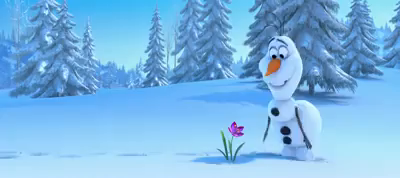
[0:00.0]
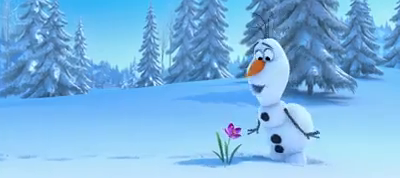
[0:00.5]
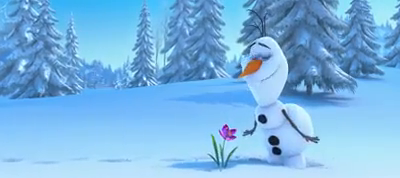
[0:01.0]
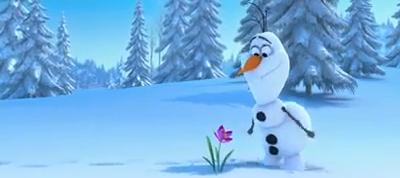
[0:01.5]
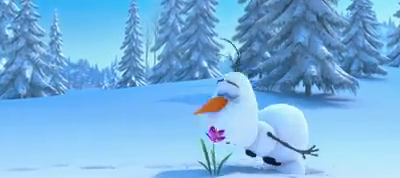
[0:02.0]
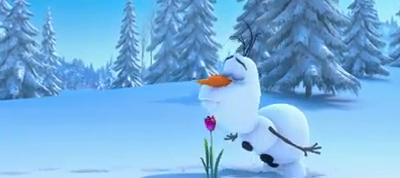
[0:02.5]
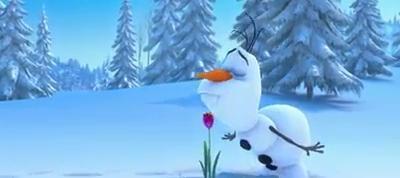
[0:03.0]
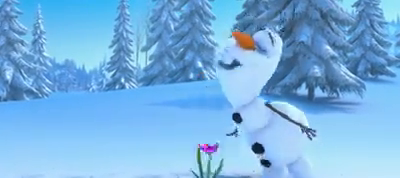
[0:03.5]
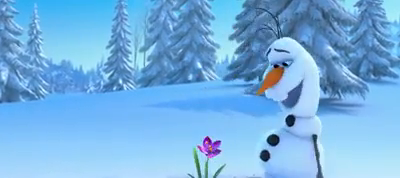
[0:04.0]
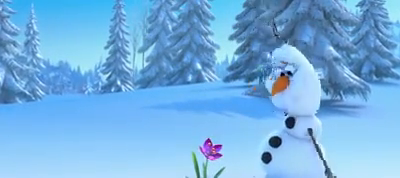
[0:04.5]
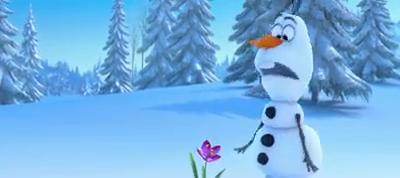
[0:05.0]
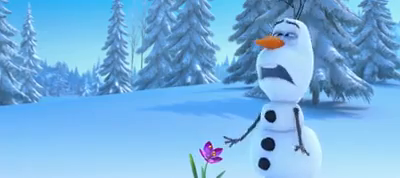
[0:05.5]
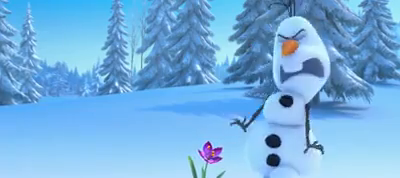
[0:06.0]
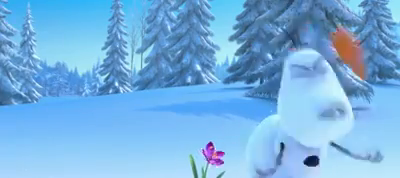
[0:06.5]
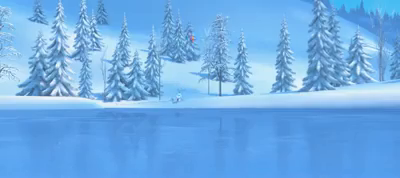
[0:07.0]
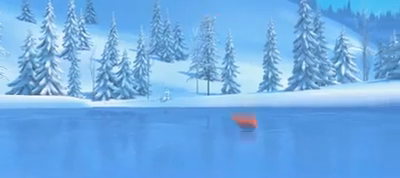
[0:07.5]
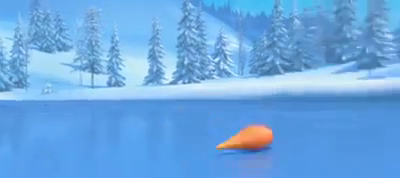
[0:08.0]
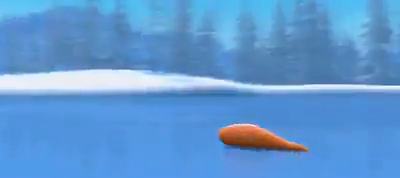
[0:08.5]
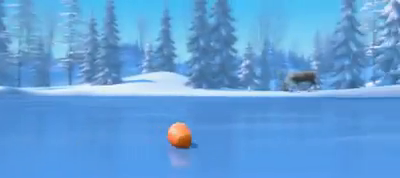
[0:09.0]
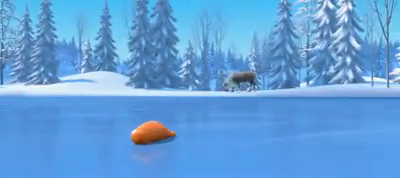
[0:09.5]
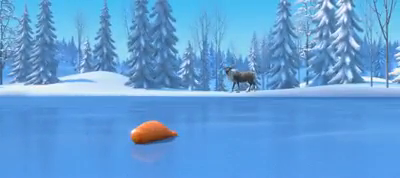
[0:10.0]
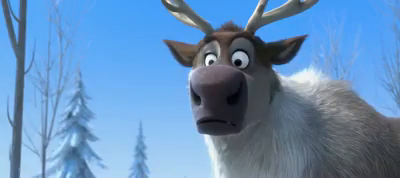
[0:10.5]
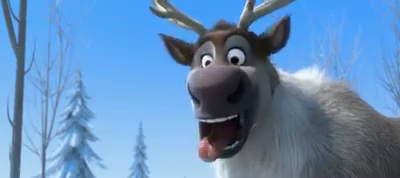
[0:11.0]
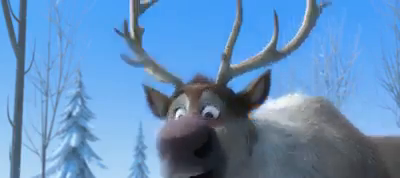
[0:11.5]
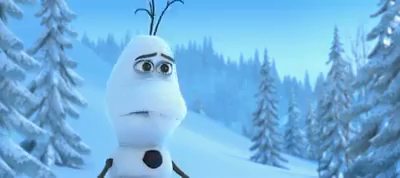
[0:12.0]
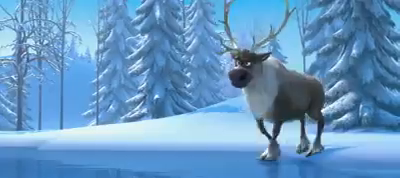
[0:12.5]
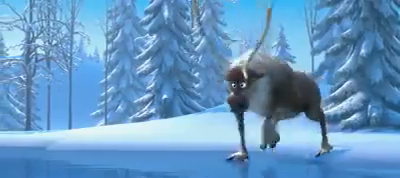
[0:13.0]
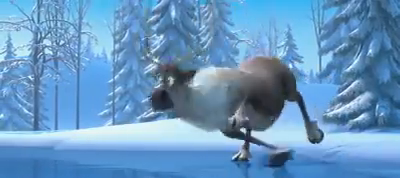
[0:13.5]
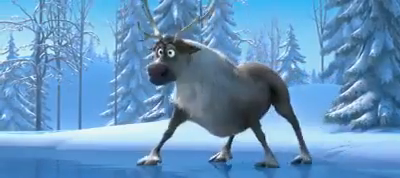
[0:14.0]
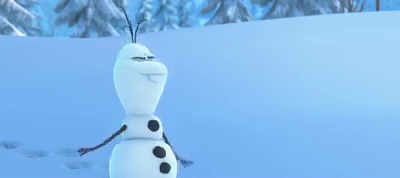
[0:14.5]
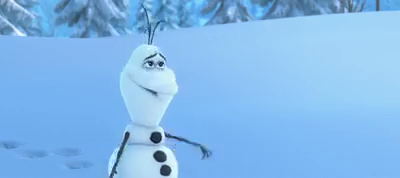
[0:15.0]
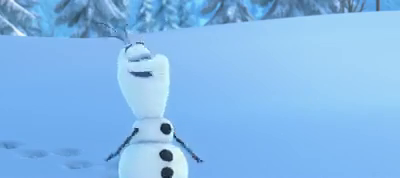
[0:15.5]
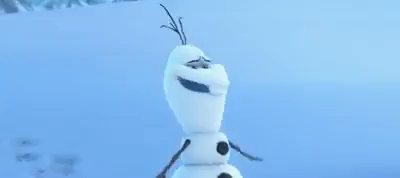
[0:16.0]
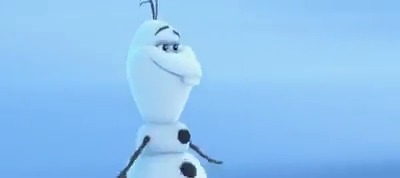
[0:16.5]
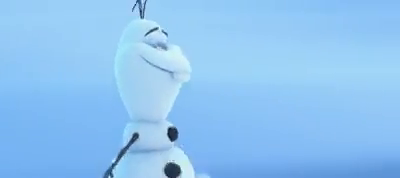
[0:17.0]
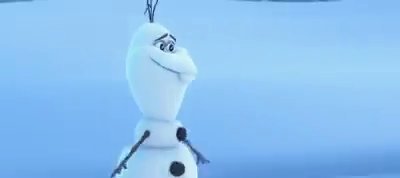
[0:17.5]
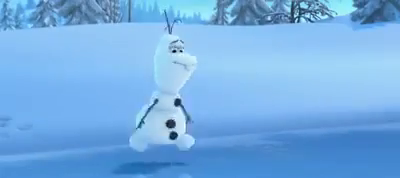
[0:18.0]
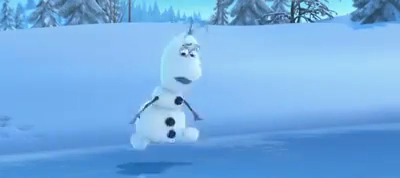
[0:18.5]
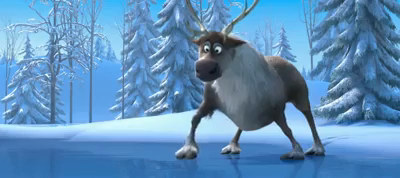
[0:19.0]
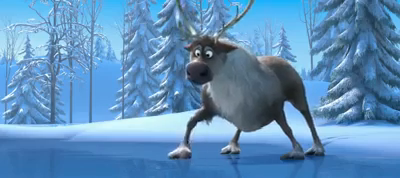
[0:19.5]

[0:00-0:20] This scene from the movie Frozen opens on a winter landscape with a lot of snow on the ground and on the pine trees. The main character is a snowman with three black buttons, a carrot nose, eyes, eyebrows, a couple of front teeth and mostly white eyes. He looks at a purple flower, talks to it, and sniffs it very hard, and the flower comes right out by its roots. He starts sneezing, and one sneeze is so hard that his carrot nose blows off and lands on an icy lake. A big brown moose with horns sees it, seems scared, and tries to walk across the ice to get it, slipping and sliding. The snowman appears to talk to the moose, and then he starts slipping on the ice as well; both try to walk but get nowhere.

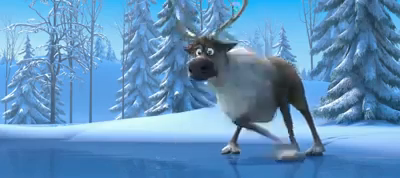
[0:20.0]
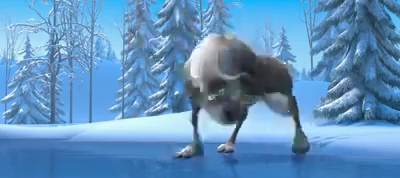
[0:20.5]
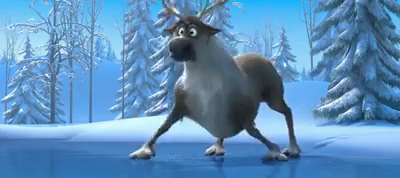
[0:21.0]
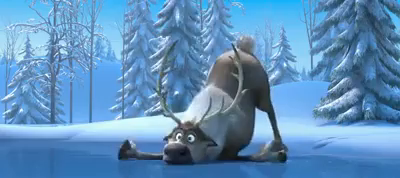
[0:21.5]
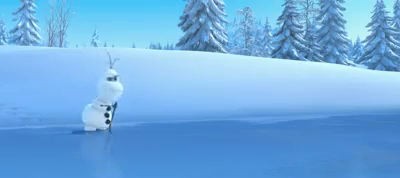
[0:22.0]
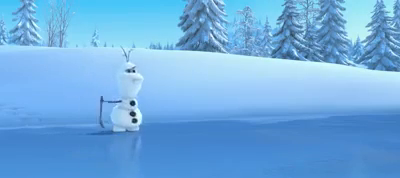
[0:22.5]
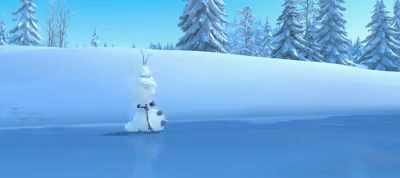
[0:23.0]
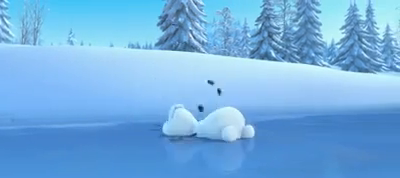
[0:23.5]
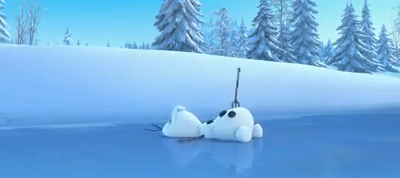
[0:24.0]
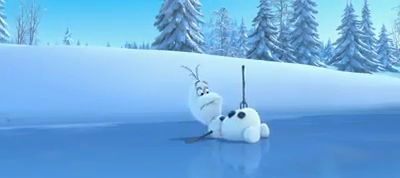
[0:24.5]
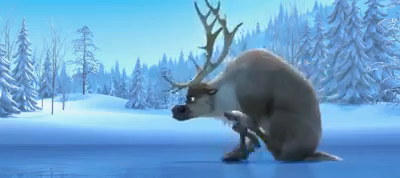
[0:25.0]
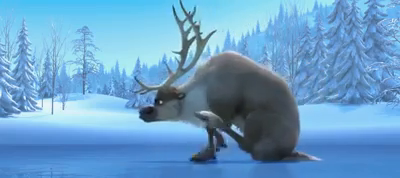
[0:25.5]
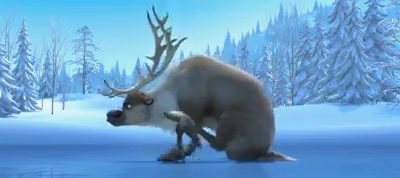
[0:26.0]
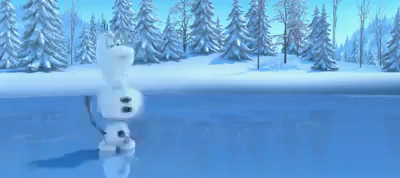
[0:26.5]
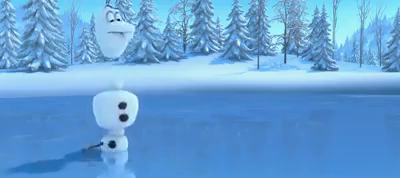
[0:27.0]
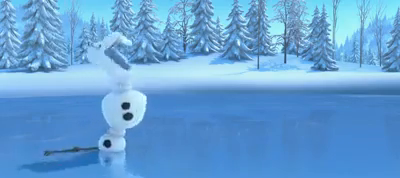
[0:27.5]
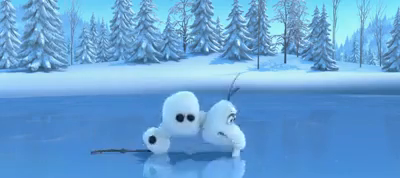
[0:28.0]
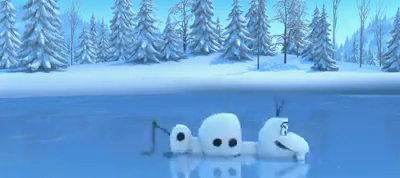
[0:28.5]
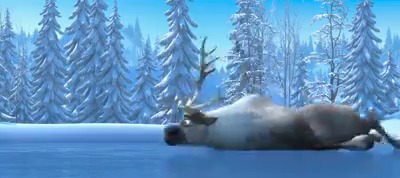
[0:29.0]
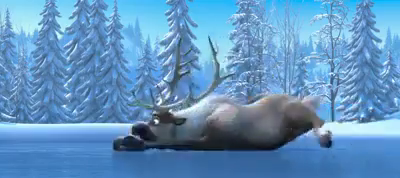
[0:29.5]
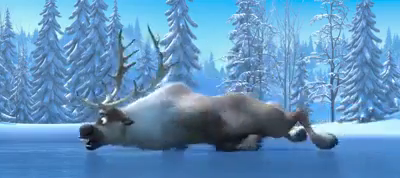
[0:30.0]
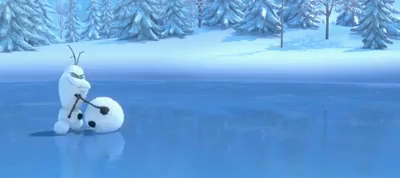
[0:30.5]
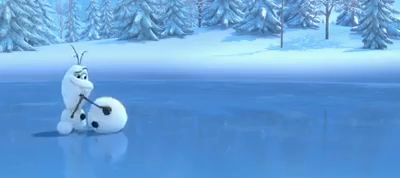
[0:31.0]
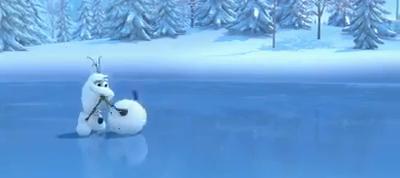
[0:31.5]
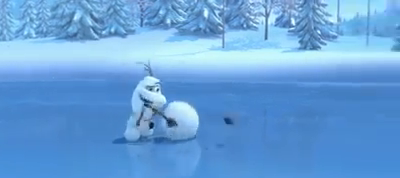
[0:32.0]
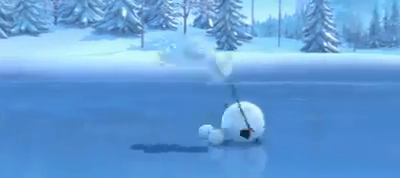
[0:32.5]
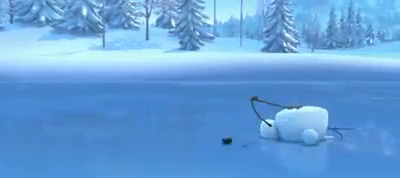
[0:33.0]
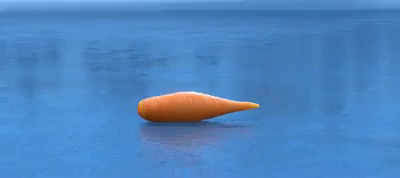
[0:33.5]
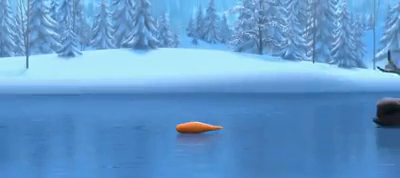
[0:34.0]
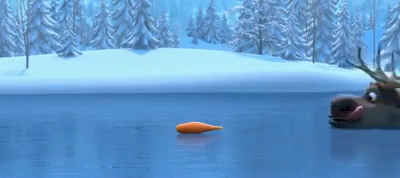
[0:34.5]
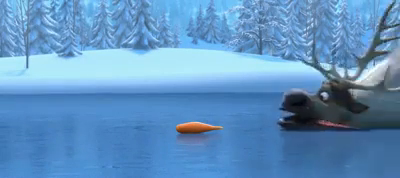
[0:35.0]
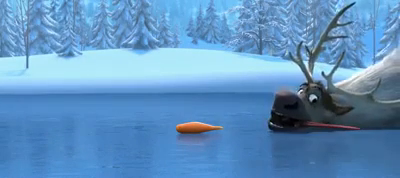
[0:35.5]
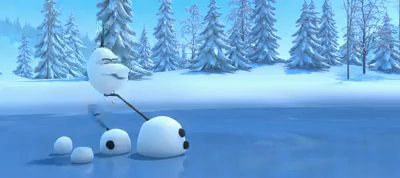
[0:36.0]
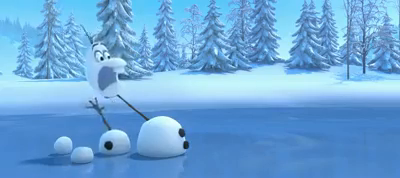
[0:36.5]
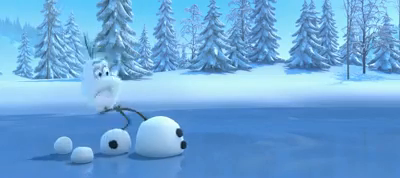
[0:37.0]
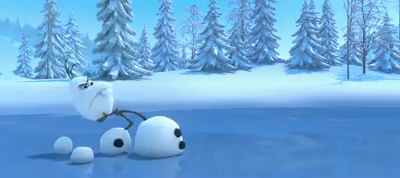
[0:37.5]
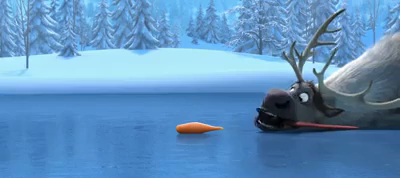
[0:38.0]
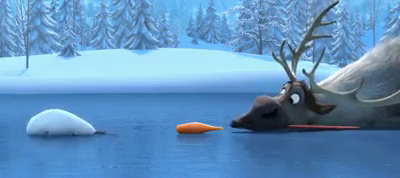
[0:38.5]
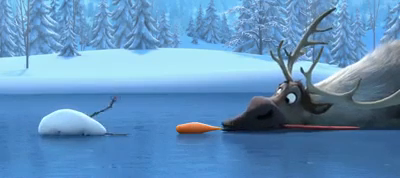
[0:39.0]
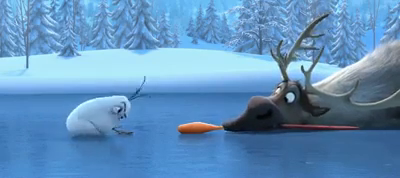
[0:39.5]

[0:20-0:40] The moose has its front legs down and its face on the ice of the frozen water. The snowman holds what looks like a fork, sticking it into the ice for stability and trying to push himself along, but it slips out, he falls on his back, and the fork sticks him in the belly. The moose sits with its butt on the ice, running its front legs as fast as it can and scooting slowly across. The snowman's body is turned around, with the bottom half up by the neck and the neck area below the body, as both of them try to reach the carrot. The moose then slides on all fours trying to grip the ice. The snowman is reduced to just his head, arms and feet, with the middle part of his body on the ground. Both get close to the carrot; the moose has its tongue hanging out, and the snowman yells and slingshots his head toward the carrot.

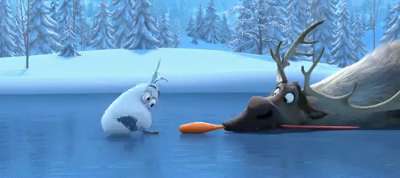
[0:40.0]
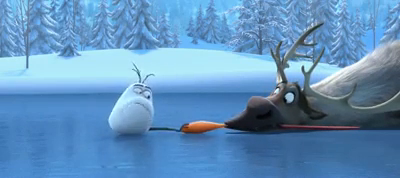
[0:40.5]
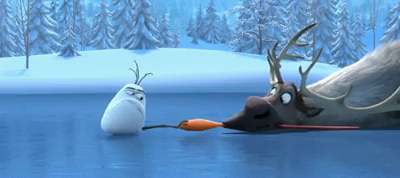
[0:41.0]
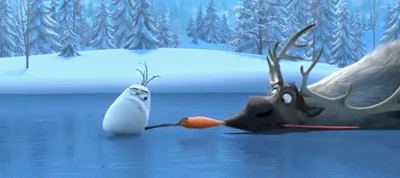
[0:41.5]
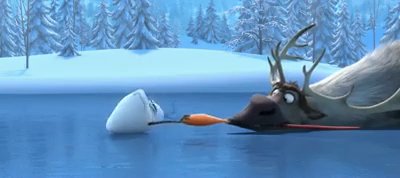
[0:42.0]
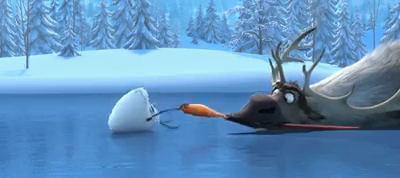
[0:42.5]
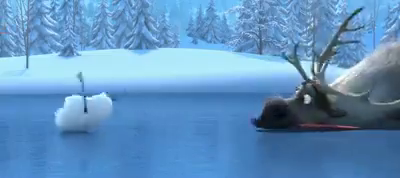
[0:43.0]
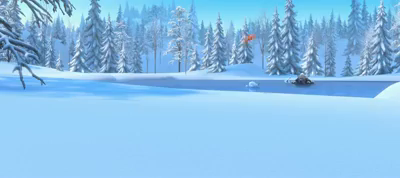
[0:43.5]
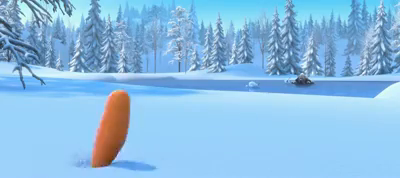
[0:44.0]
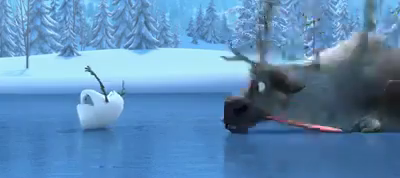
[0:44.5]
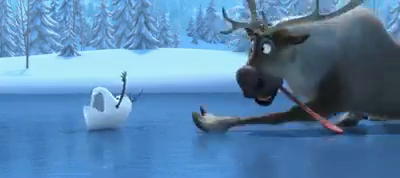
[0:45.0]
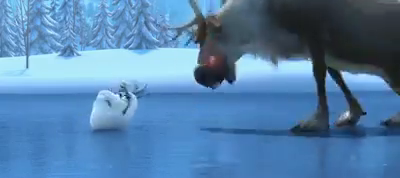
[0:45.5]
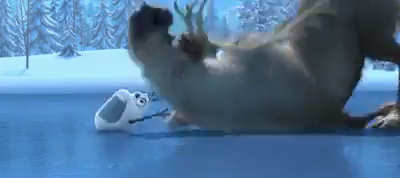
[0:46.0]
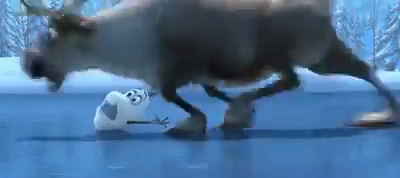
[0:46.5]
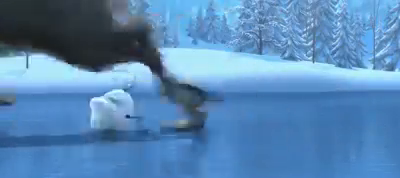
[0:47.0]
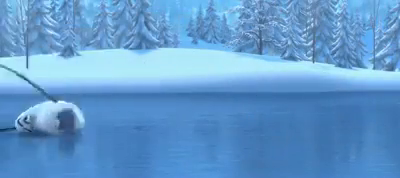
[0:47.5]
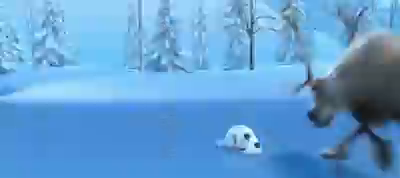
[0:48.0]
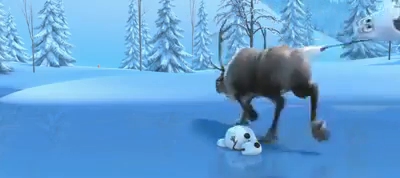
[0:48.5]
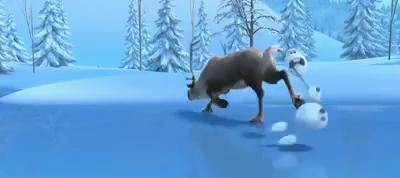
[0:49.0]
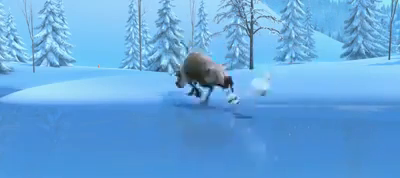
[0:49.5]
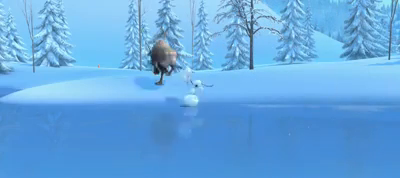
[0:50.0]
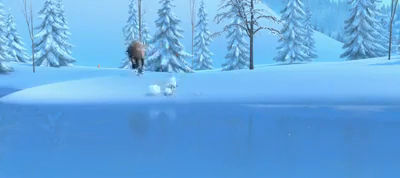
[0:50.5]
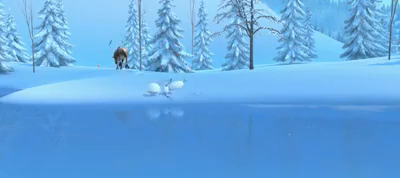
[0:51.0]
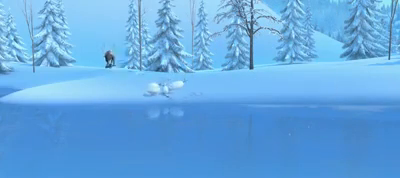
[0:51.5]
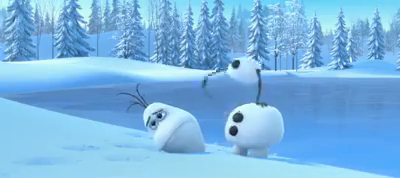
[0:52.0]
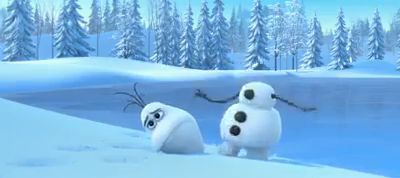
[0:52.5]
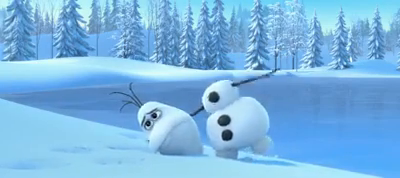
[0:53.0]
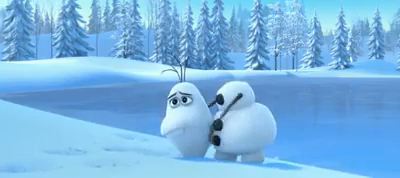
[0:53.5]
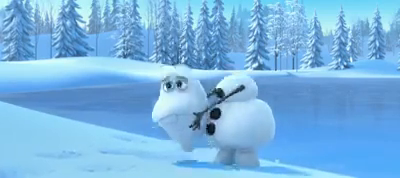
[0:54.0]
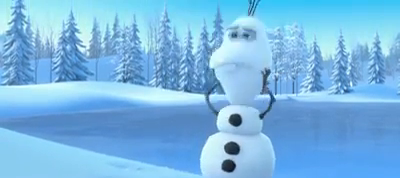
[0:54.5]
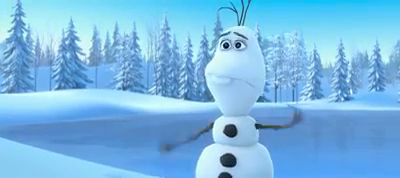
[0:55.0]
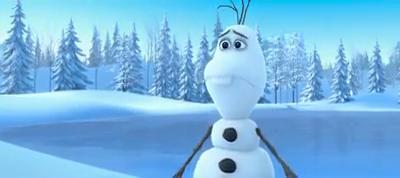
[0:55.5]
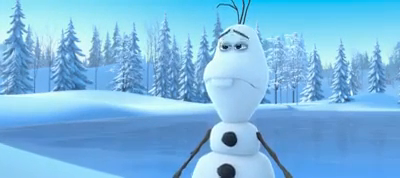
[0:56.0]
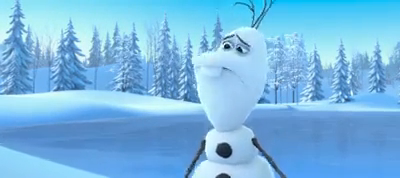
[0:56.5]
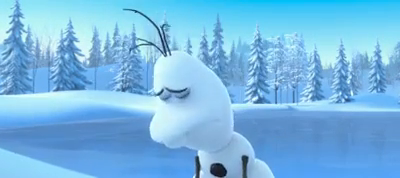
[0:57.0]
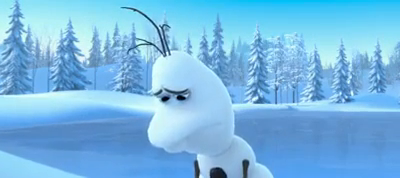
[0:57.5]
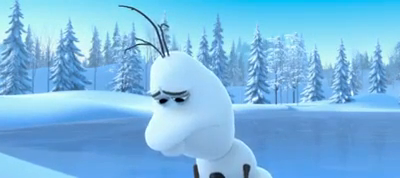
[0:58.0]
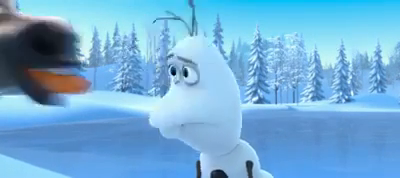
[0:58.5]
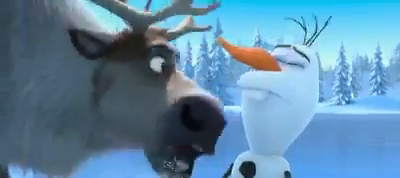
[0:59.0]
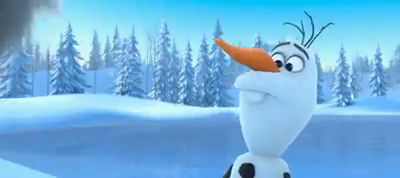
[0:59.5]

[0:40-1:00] The snowman's head, on its own with an arm attached, reaches the carrot, and instead of grabbing it, maybe using its stick ears, slingshots the carrot back onto the snow. The moose looks upset and goes after it, now walking steadily on four legs. The snowman grabs onto the moose's tail, and as they run past the other parts of the snowman's body, those grab on too, so the snowman hangs from the moose's tail in three parts, bouncing along. They reach the shore, where the snowman puts himself back together in the right order and lowers his head, seemingly sad. The moose then brings back the carrot, sticks it back on the snowman as his nose, and gives him a lick.